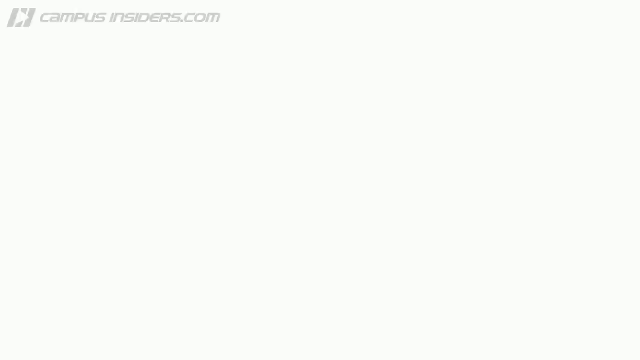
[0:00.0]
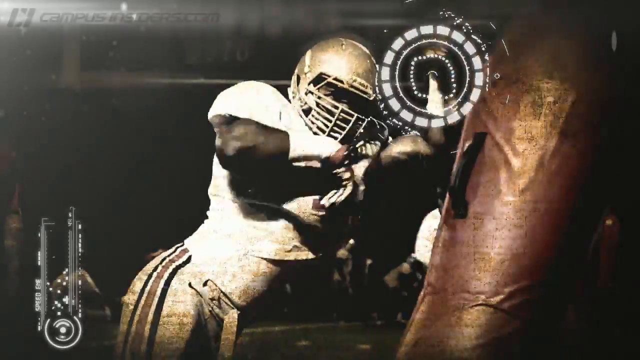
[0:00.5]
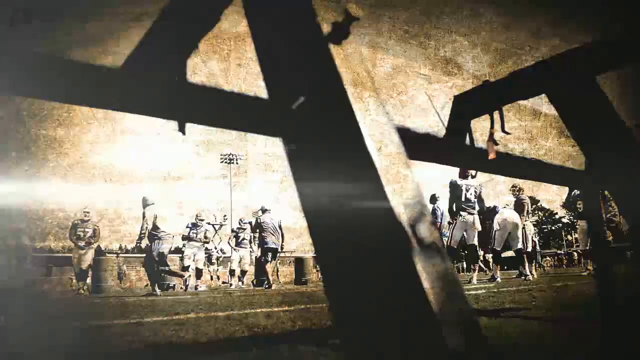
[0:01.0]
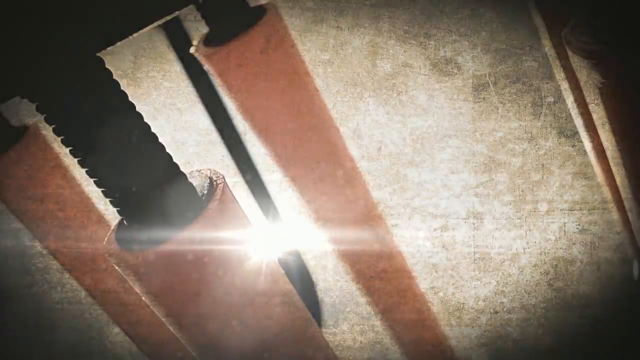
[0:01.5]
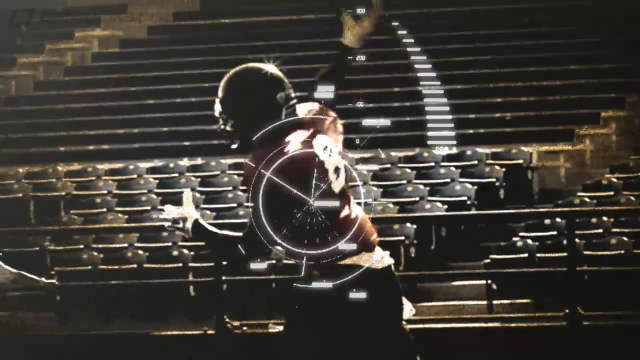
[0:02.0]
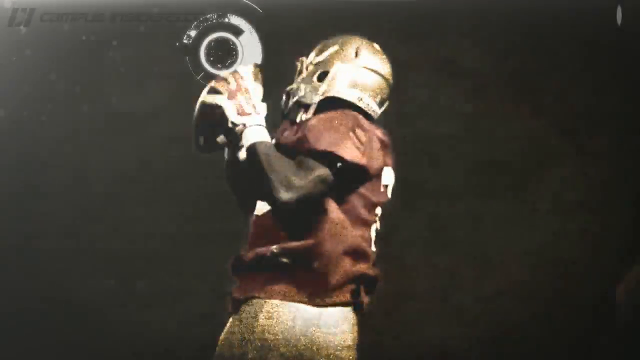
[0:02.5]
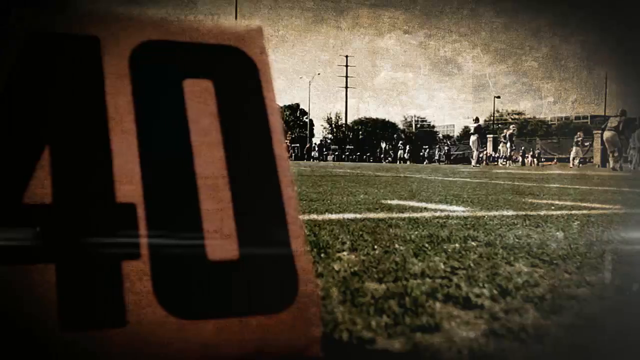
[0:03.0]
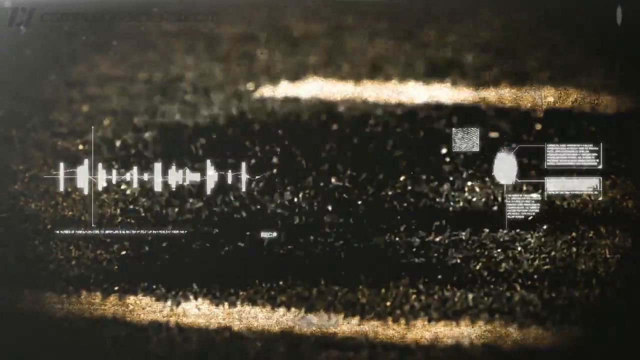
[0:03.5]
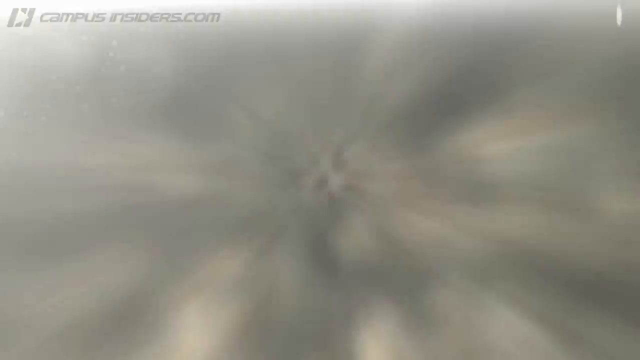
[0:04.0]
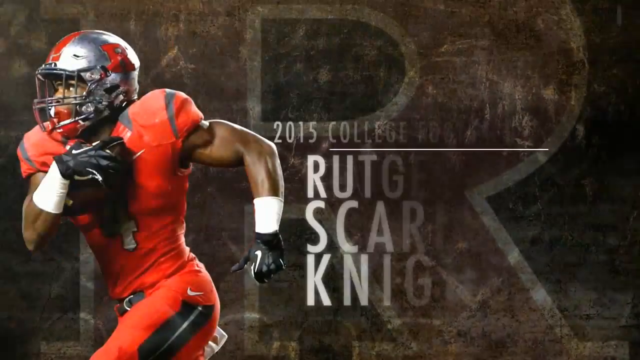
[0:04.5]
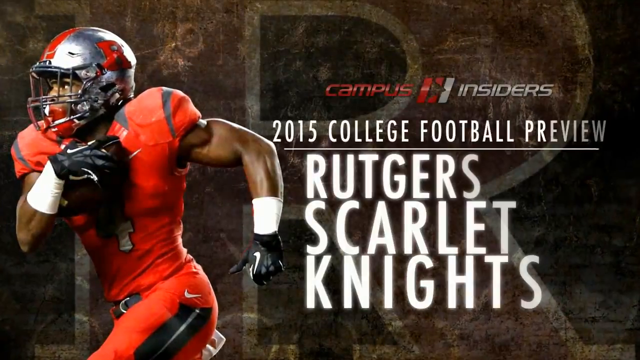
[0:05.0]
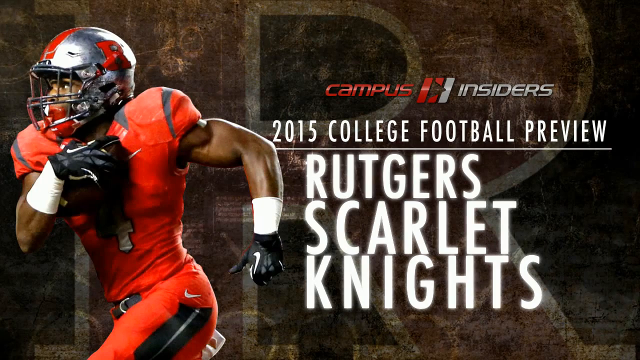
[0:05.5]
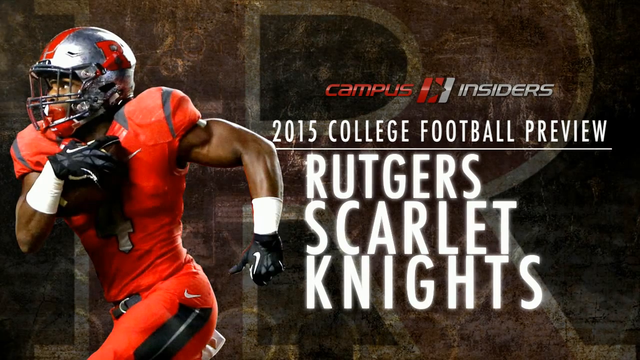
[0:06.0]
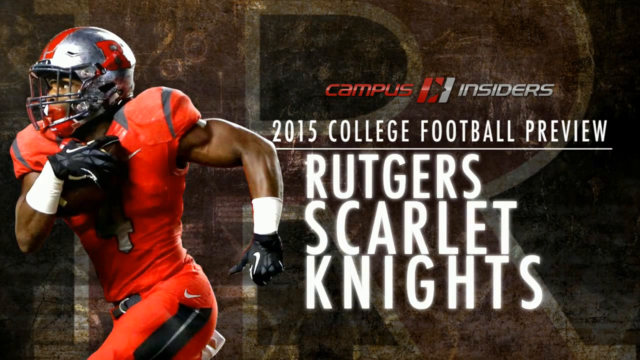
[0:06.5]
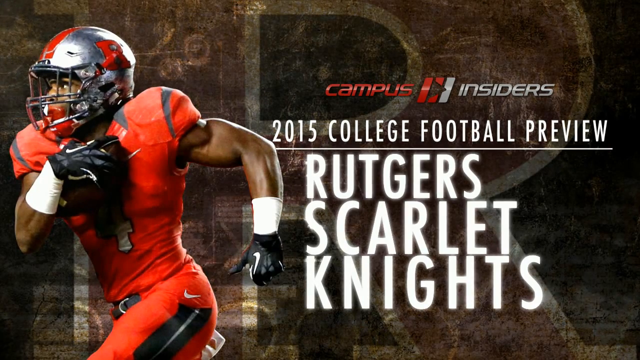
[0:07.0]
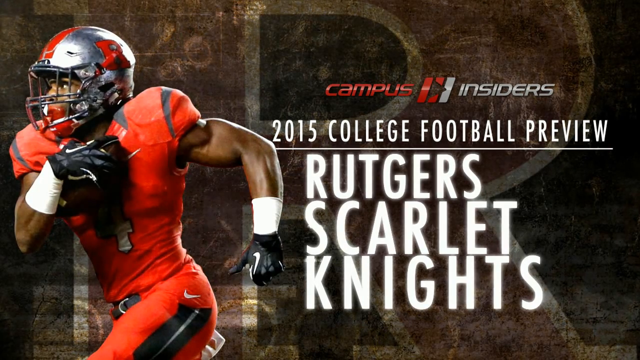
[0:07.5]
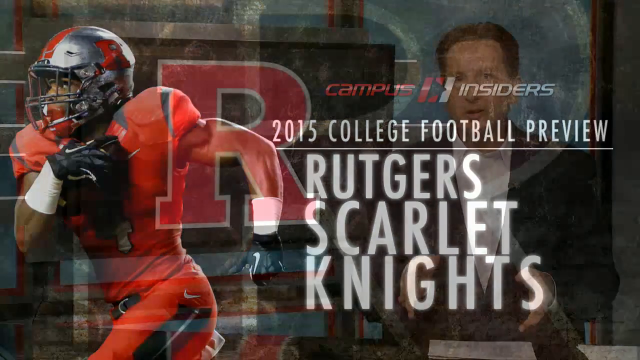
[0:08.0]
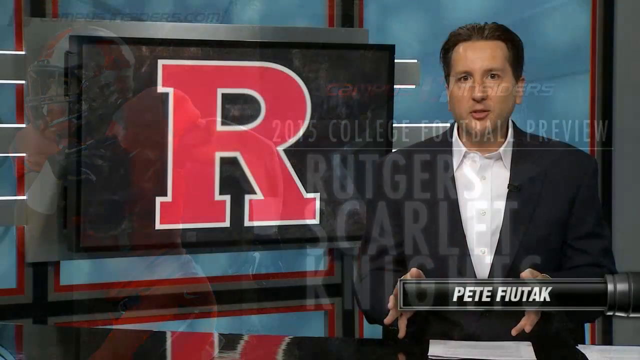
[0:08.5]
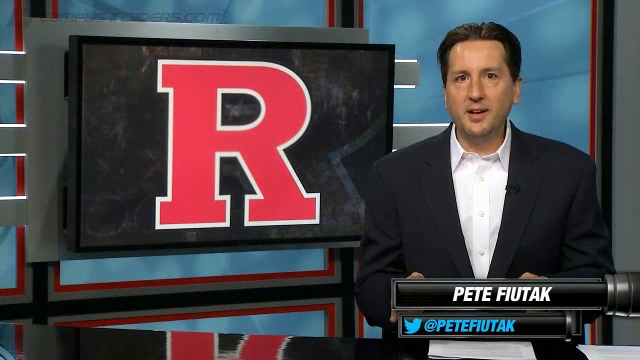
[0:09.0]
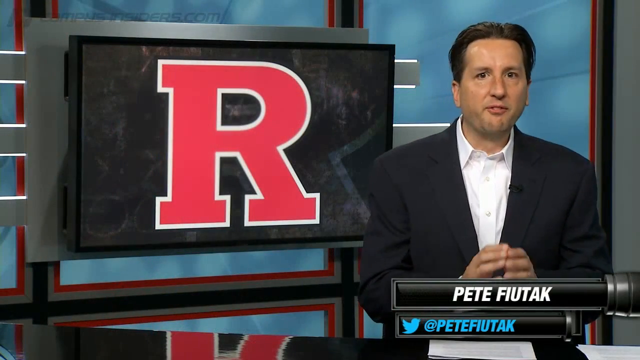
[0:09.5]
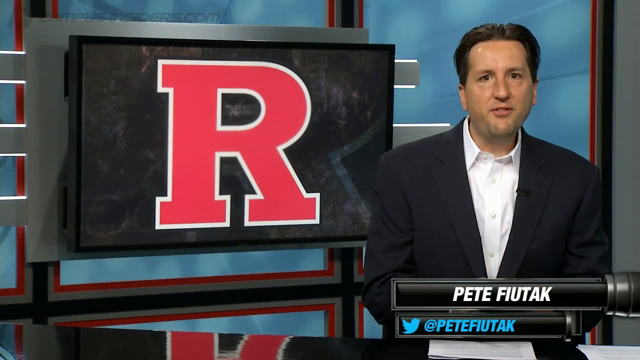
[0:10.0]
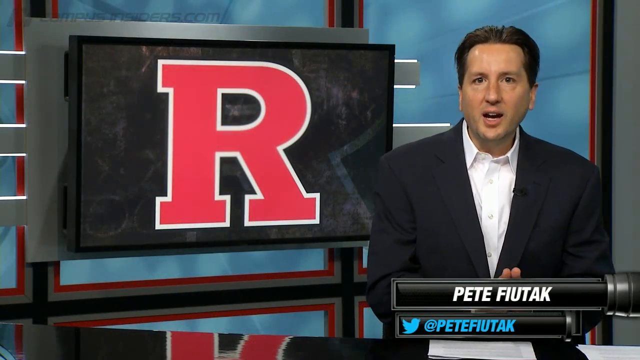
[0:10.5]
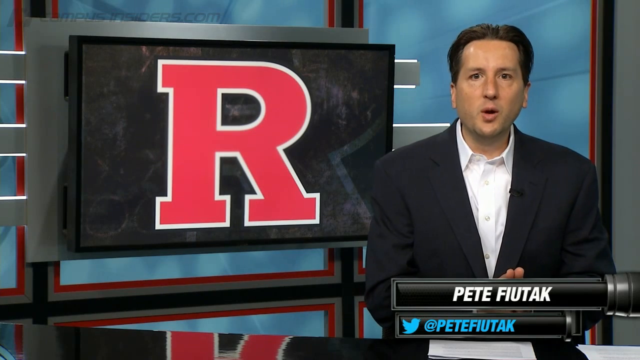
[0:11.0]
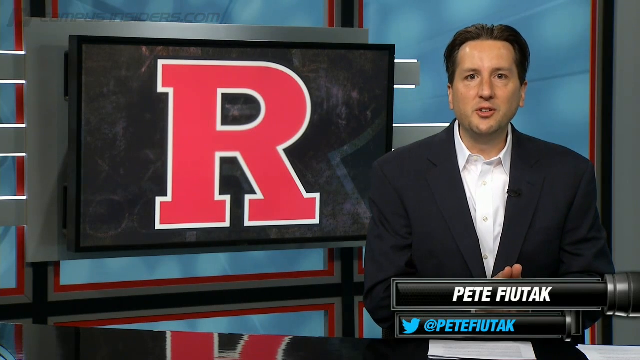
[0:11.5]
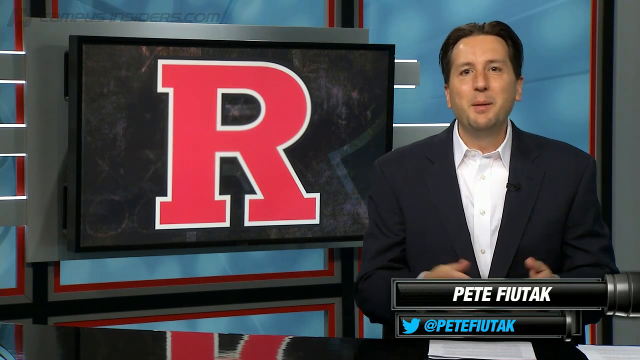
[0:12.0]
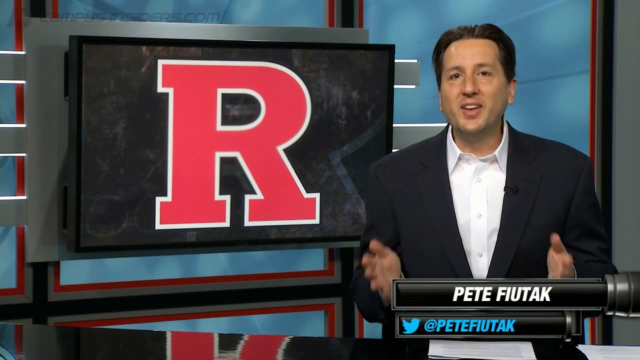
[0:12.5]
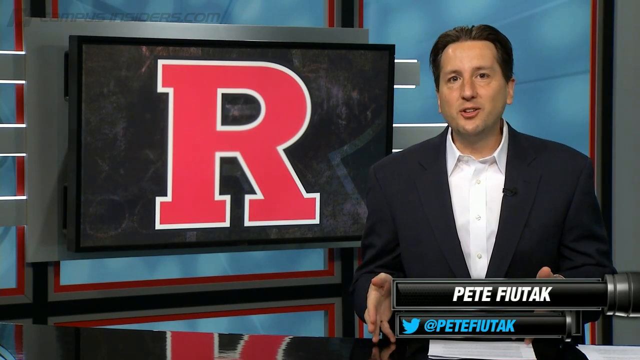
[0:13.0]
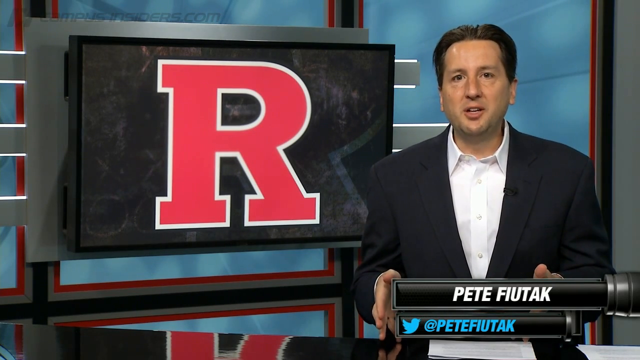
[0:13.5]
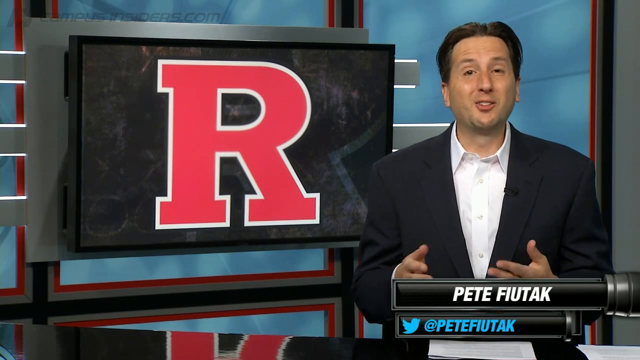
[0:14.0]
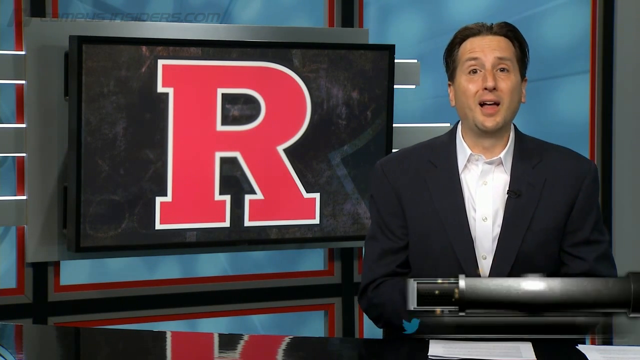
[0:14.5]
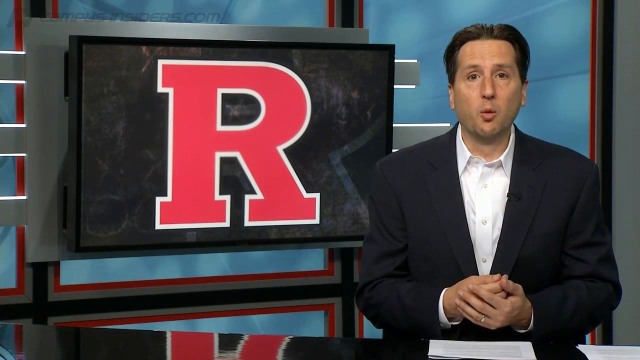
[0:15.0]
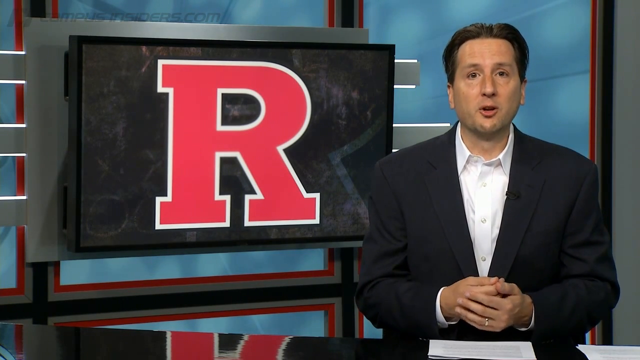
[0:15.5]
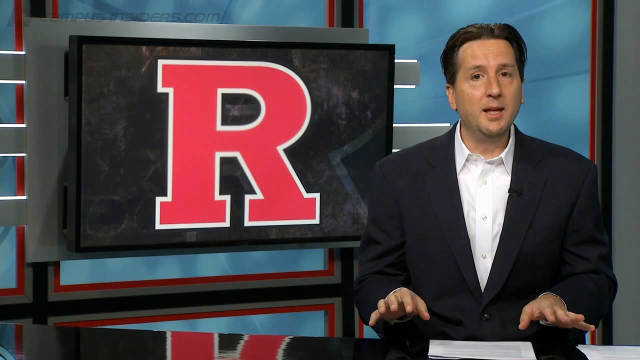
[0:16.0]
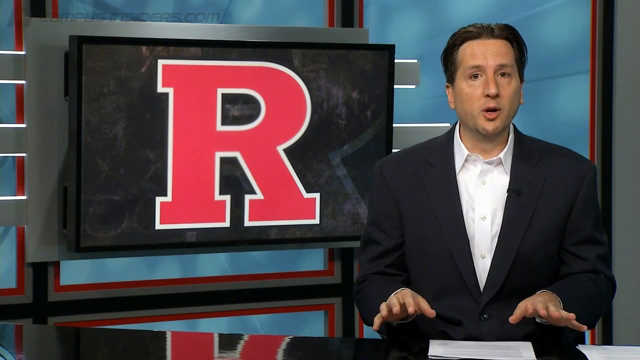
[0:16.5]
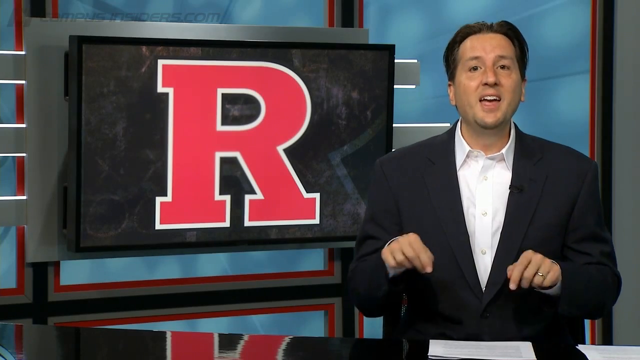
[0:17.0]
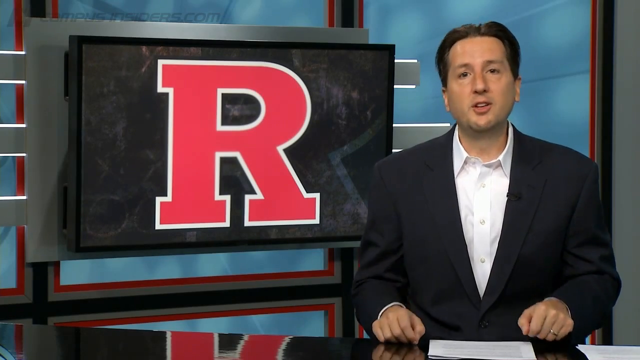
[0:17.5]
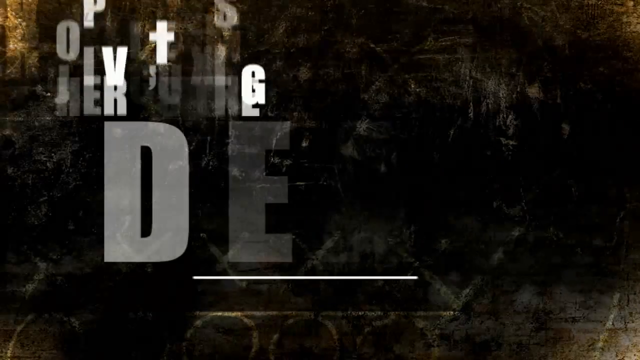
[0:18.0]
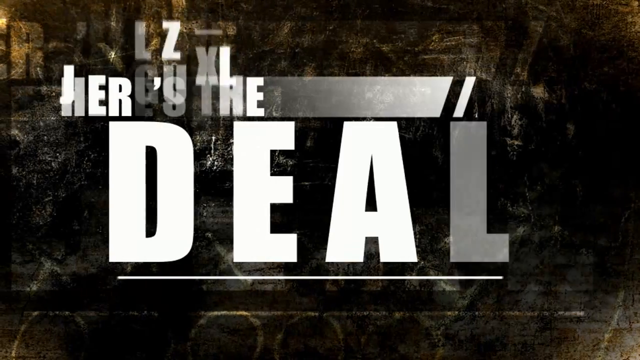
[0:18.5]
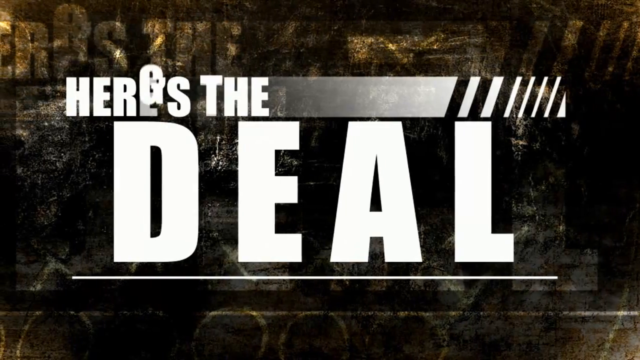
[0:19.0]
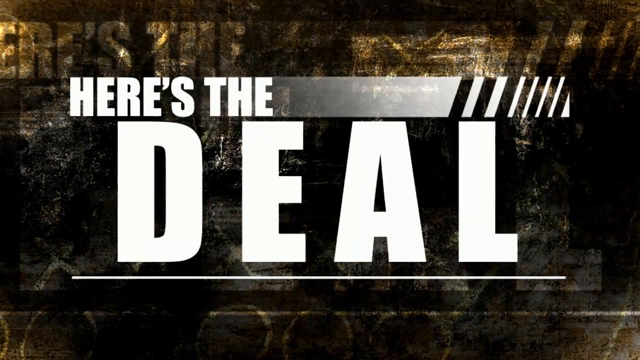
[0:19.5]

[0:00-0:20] A grey logo reading "campusinsiders.com" is in the top left of the screen, like a watermark. A sports program begins with a football player catching a ball; he wears a gold helmet and a white and red practice jersey, and graphics like a bullseye appear over him. The video cuts to a football field, with a perspective close-up of the orange 40-yard line marker and football players on the field in the background. The intro piece has a vignette effect. A player holding a football is on the left side of the screen in a Rutgers University uniform, bright red with flashes of grey stripes and a grey stripe down the leg. He wears black Nike football gloves and white wristbands, and his silver helmet has the Rutgers logo on the left. On the right of the screen the Campus Insiders logo is superimposed again, followed by the text "2015 College Football Preview Rutgers Scarlet Knights." The scene fades to a studio, where an anchorman is on the right of the screen. A super at the bottom gives his name as Pete Fiutak and shows his Twitter handle, at Pete Fiutak, along with the Twitter logo. On the left, a large TV screen behind him shows the simple capital R Rutgers logo on a gray background. The anchor talks and gestures with his hands. A graphic in the same style as the intro then takes over the screen, reading in all caps "Here's the deal."